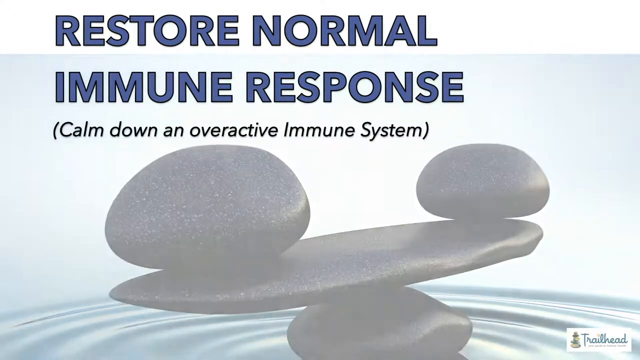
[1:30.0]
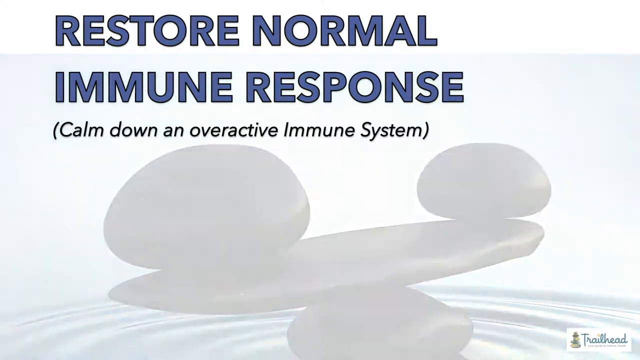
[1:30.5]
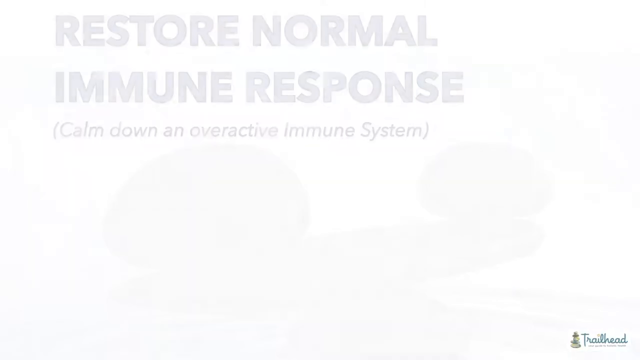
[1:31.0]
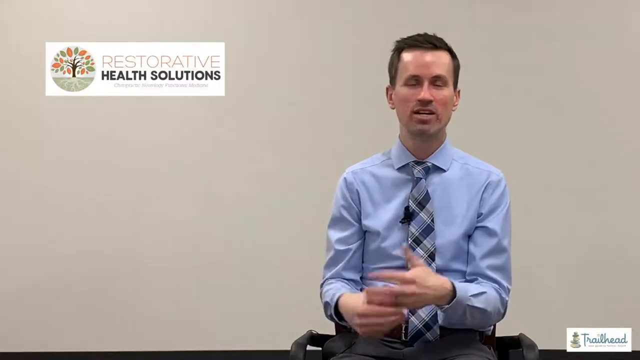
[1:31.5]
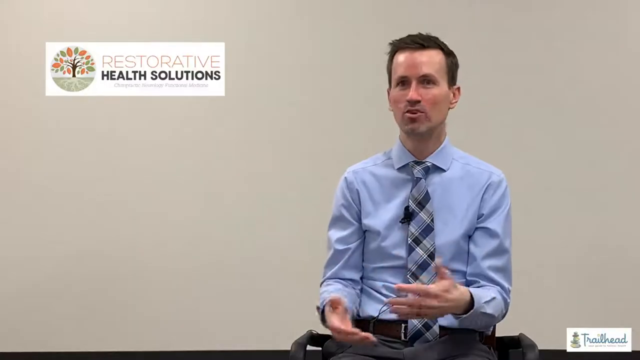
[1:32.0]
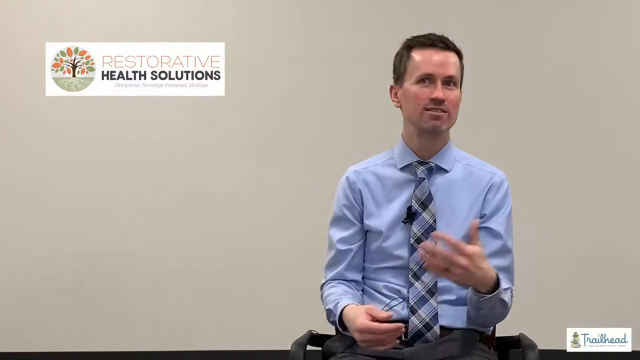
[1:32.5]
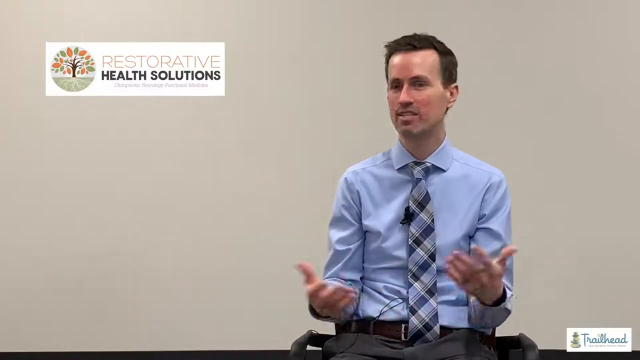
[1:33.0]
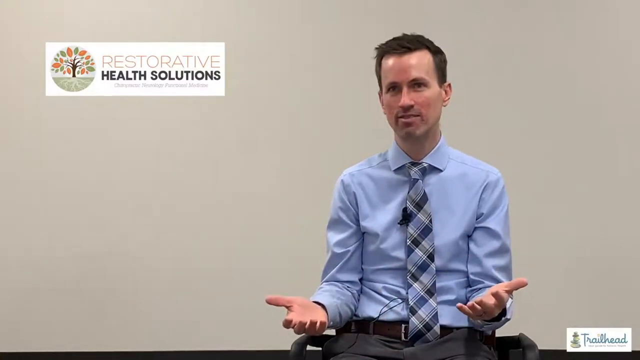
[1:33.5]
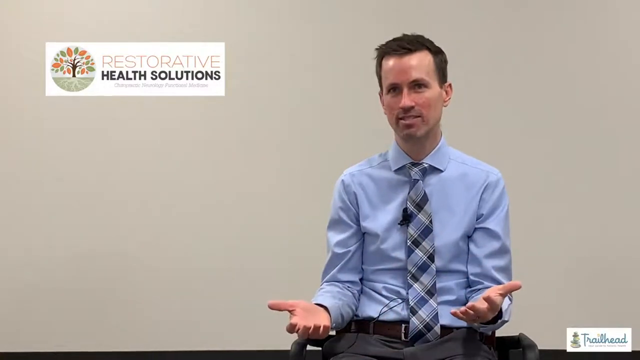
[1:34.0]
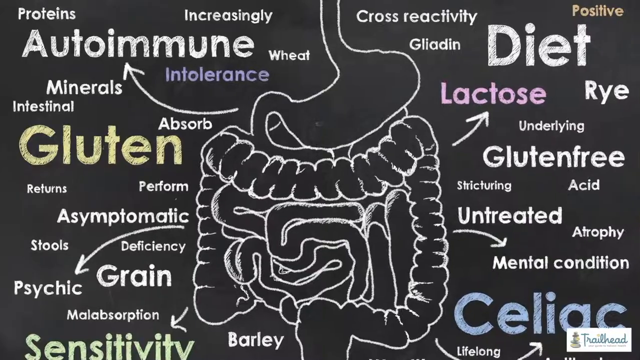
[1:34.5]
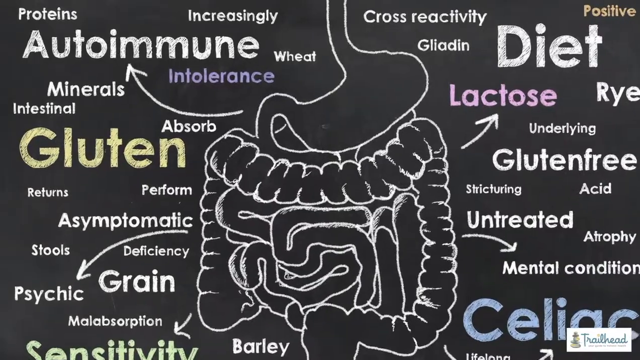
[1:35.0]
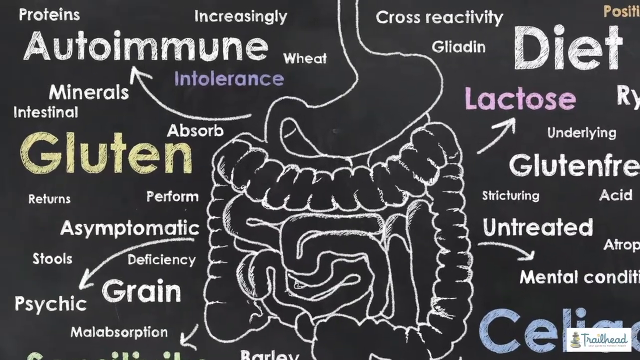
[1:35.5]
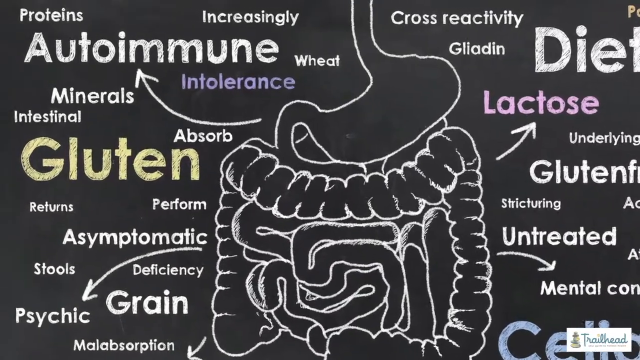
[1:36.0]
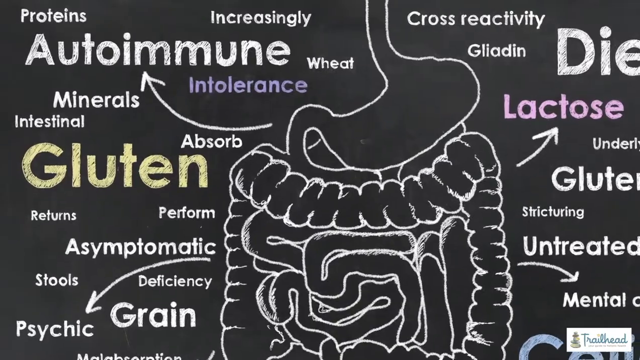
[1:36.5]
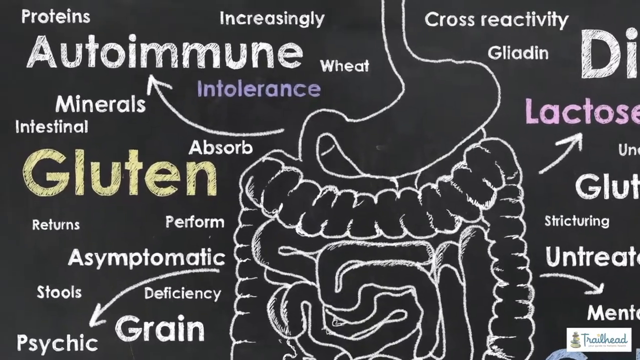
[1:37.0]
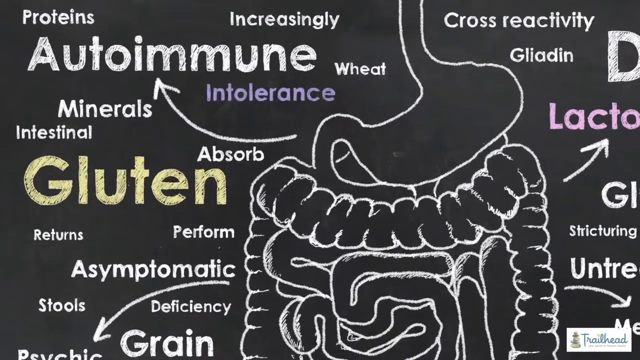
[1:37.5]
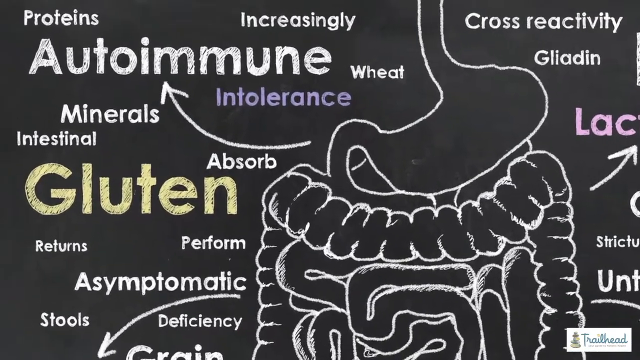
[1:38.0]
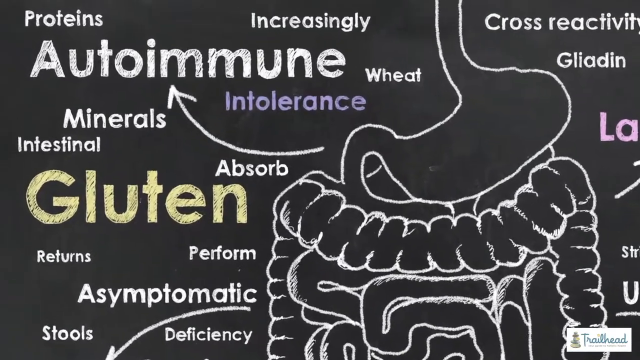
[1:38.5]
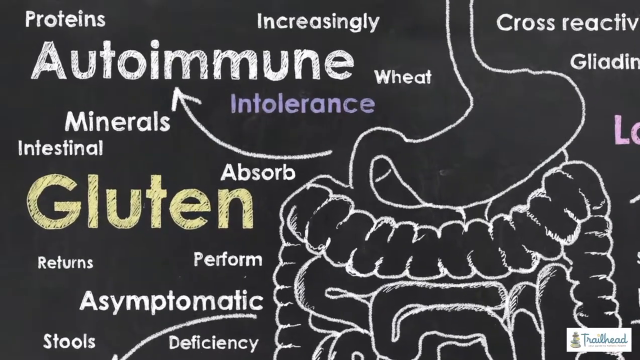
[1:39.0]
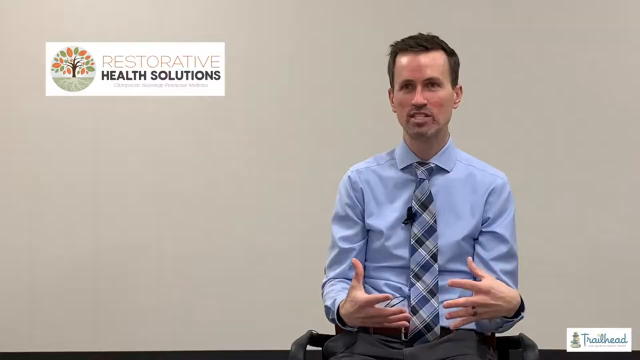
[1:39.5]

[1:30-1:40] Bolded navy blue lettering on the screen reads "restore normal immune response," and below, in parentheses, it says "calm down an overactive immune system." The slide shows a water feature sculpture with ripples in the water and four black rocks balanced to form some sort of teeter-totter. The video then splits back to the dark-haired man in the blue dress shirt in front of a gray screen, with "restorative health solutions" in the top left-hand corner of the screen. Next comes what appears to be a chalkboard with numerous medical or dietary terms involved with the autoimmune system.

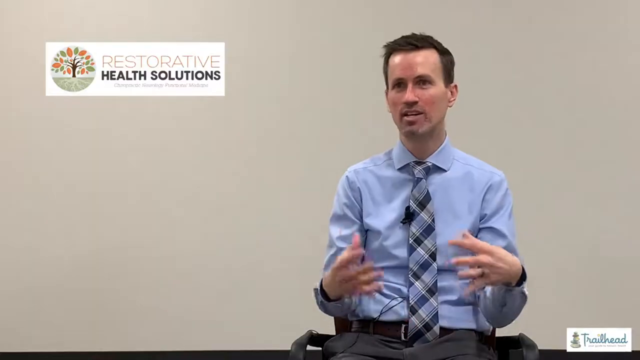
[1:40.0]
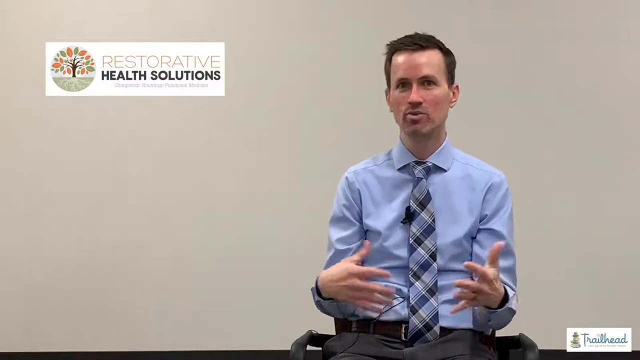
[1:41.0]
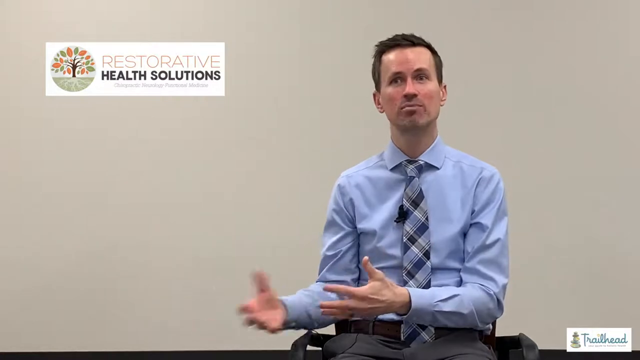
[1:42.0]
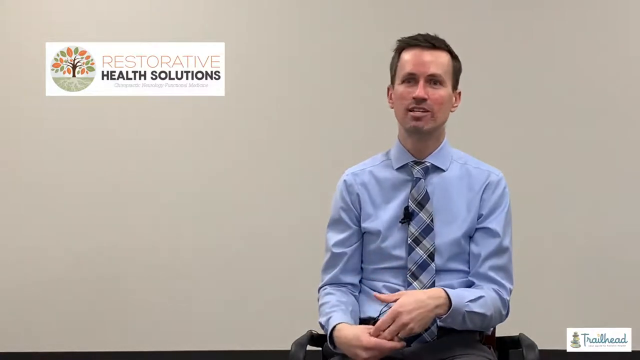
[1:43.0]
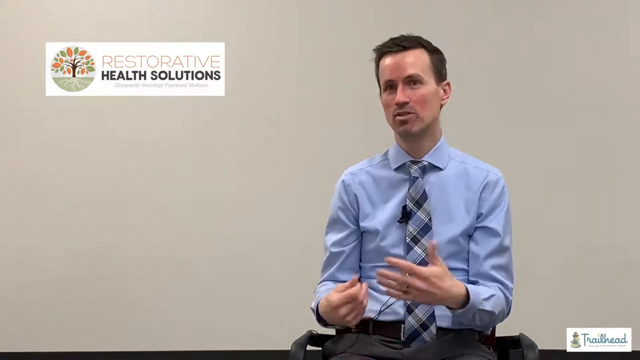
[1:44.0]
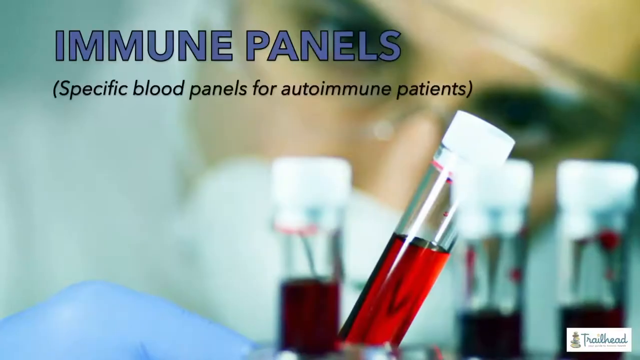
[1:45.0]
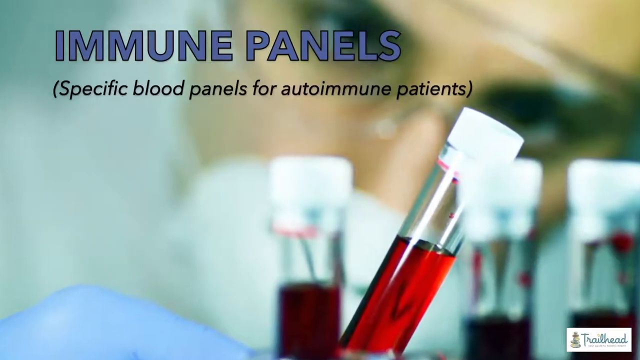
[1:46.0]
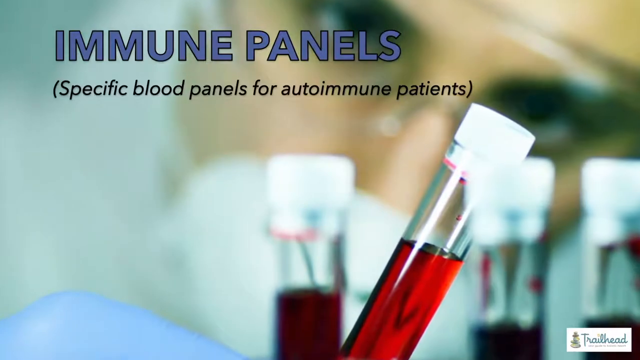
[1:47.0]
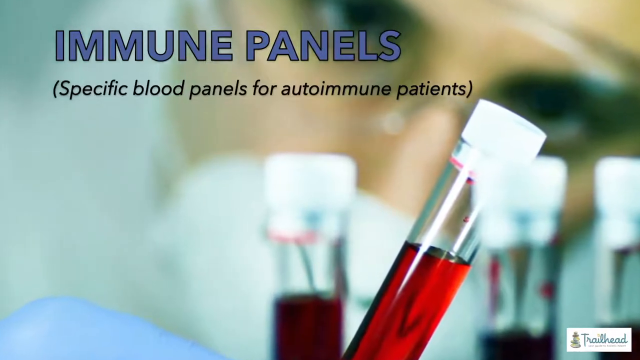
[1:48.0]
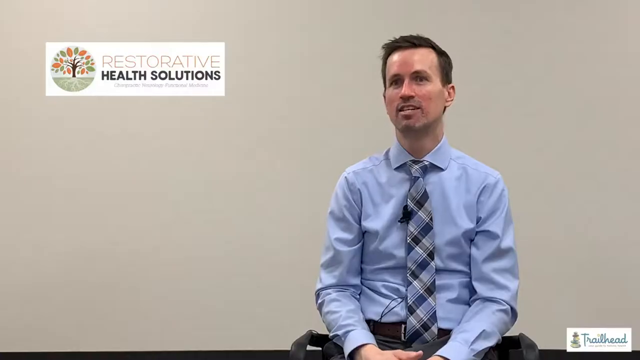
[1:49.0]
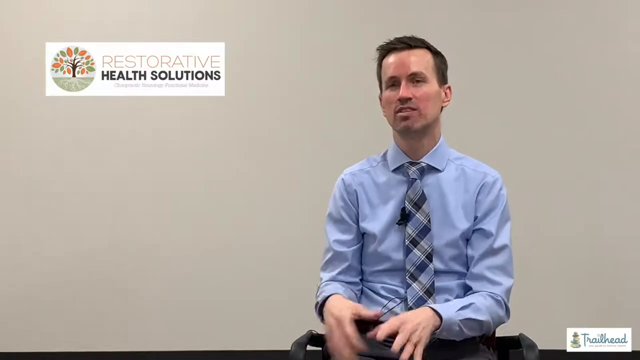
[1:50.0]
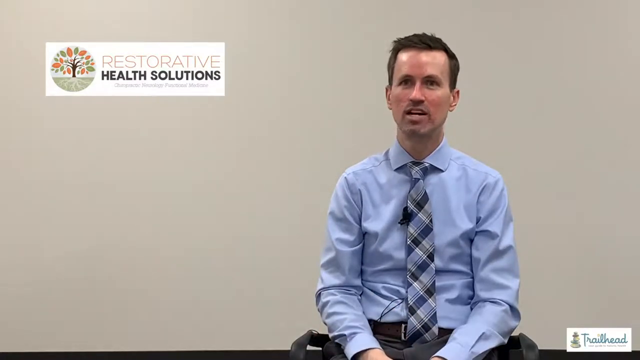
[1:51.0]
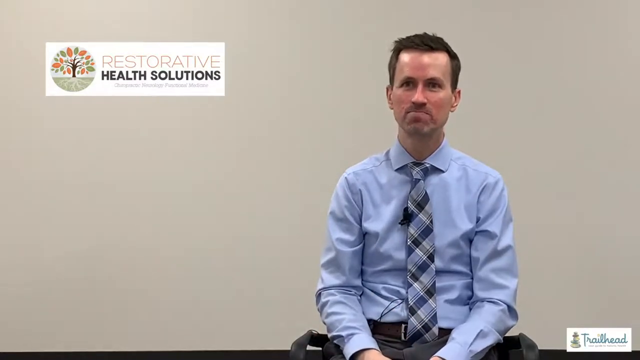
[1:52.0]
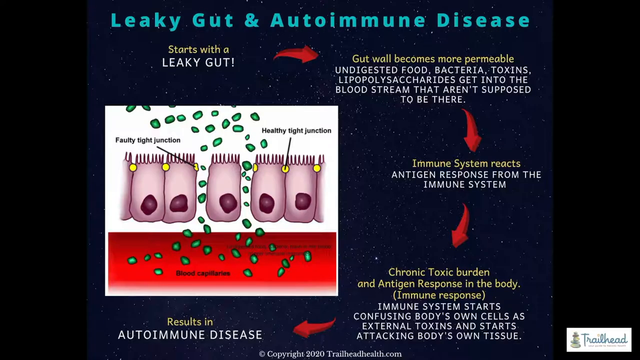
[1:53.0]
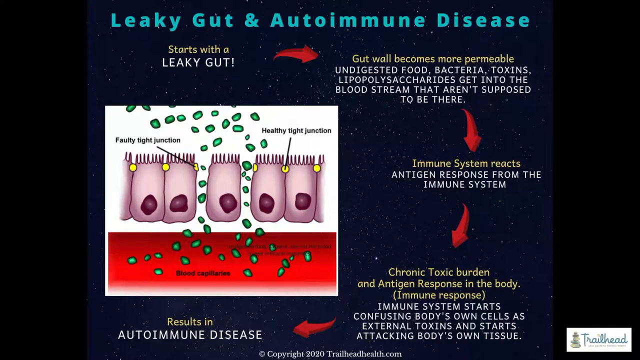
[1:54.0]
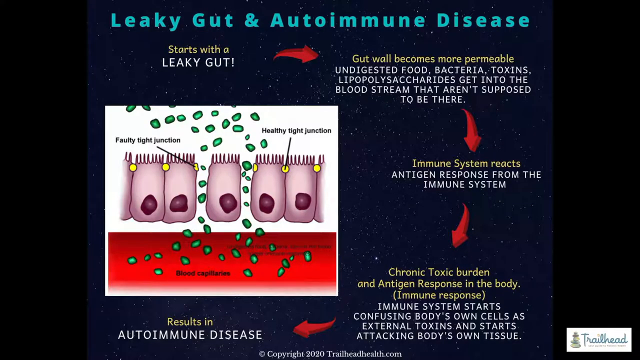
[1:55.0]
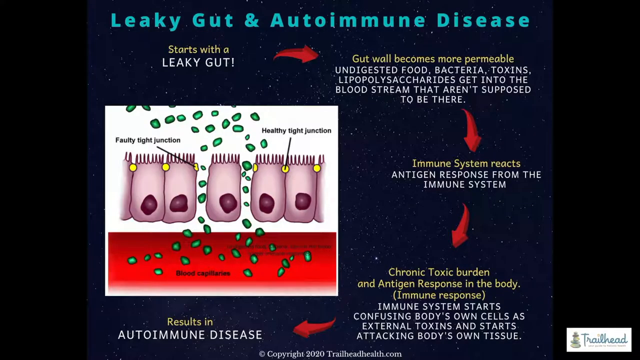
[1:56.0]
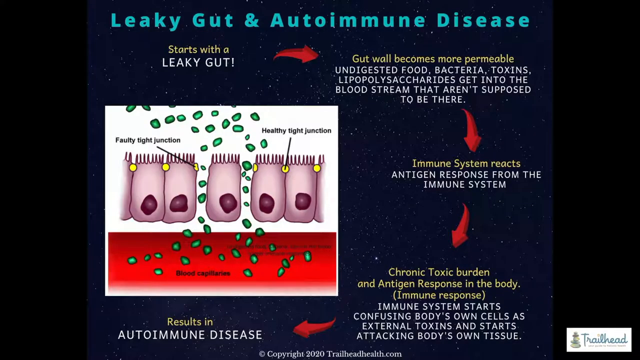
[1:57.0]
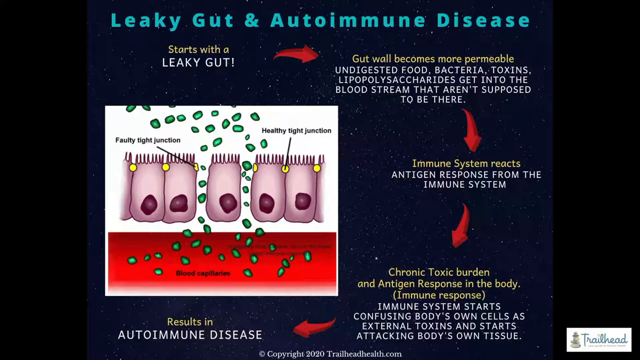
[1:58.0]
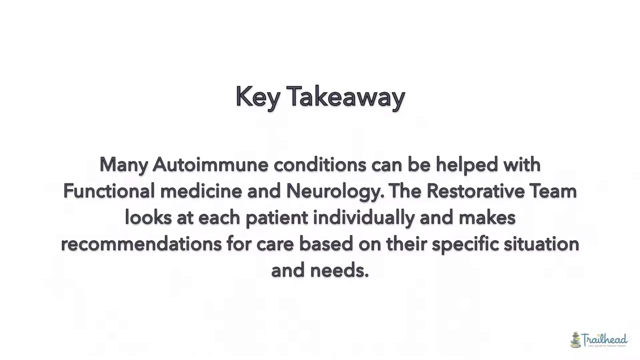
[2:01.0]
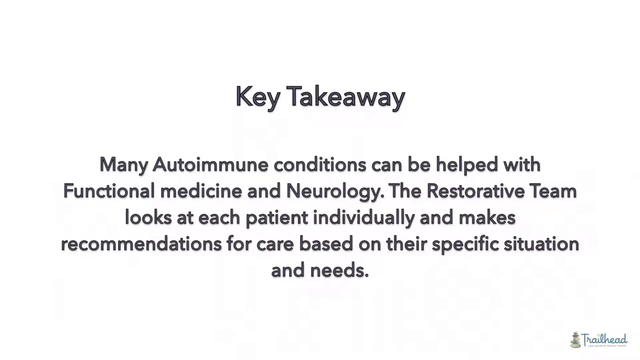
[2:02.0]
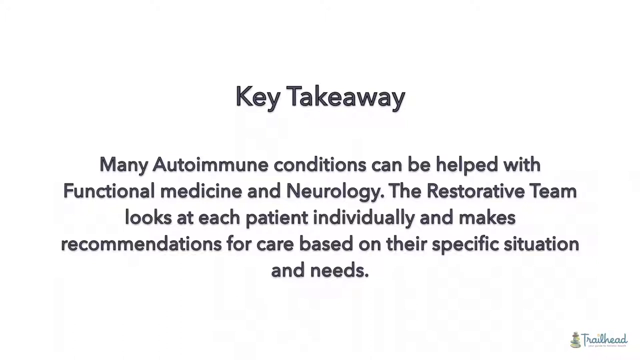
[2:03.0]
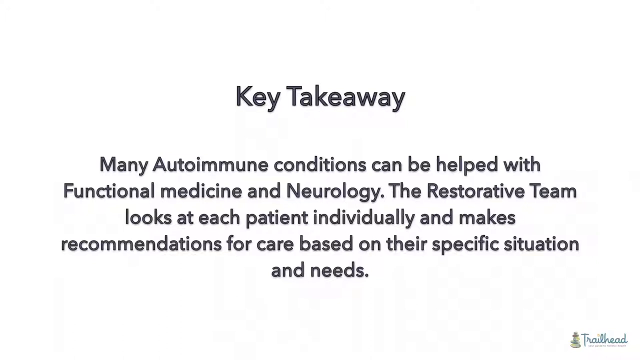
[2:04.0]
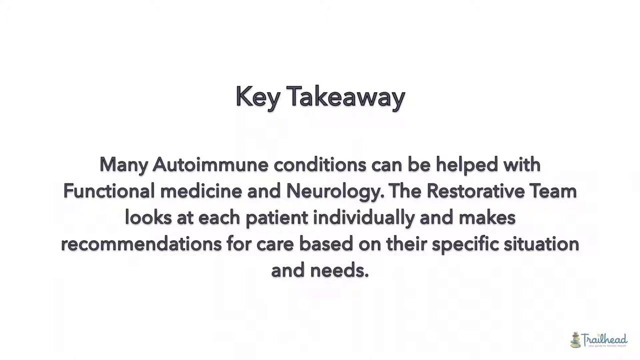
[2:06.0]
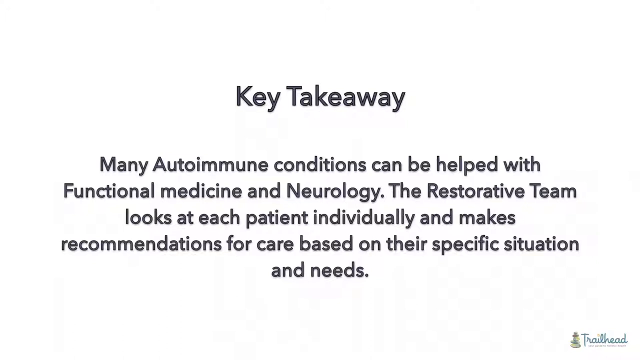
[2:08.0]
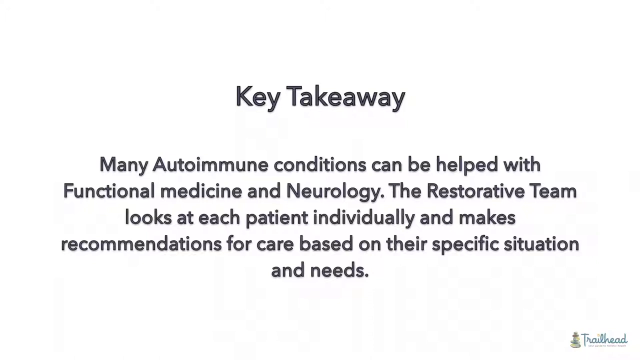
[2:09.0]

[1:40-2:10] The dark-haired man in the blue shirt, black pants and tie is speaking and using his hands, with the gray screen behind him. The next slide reads "immune panels" in dark navy blue lettering, and below, highlighted in parentheses, it states "specific blood panels for autoimmune patients." The picture appears to show a phlebotomy blood tube: a tube with a cap and red liquid, possibly blood that has been spun down in a centrifuge. A woman with glasses and a mask on appears to be working with beakers. The video then goes back to the man, who is still sitting and speaking in front of the gray background; he also appears to have a bag or some sort of item next to him on the right side of his body.